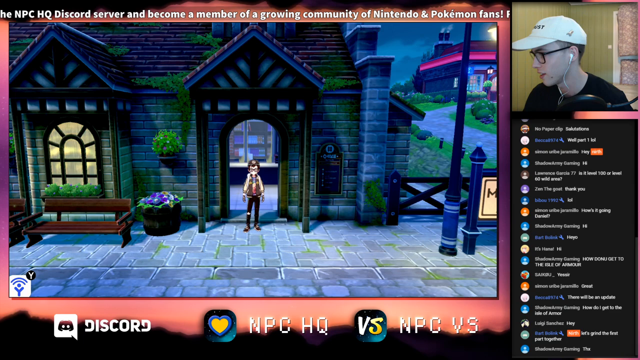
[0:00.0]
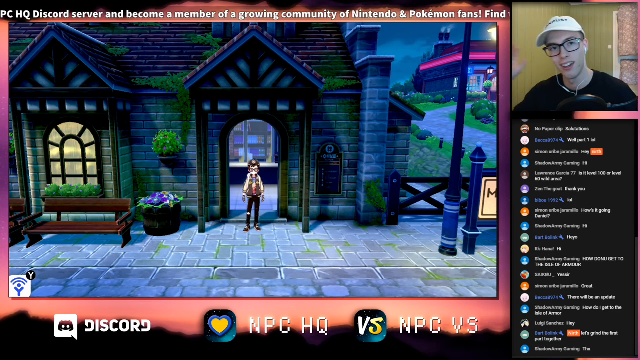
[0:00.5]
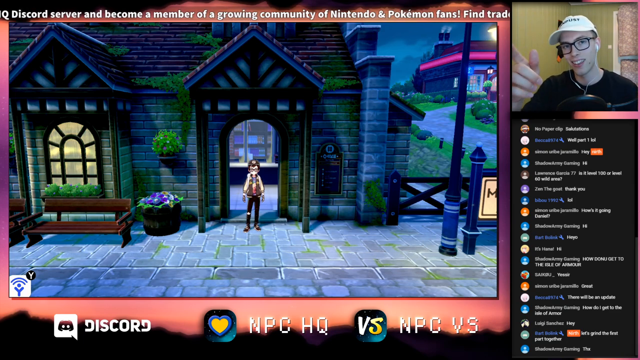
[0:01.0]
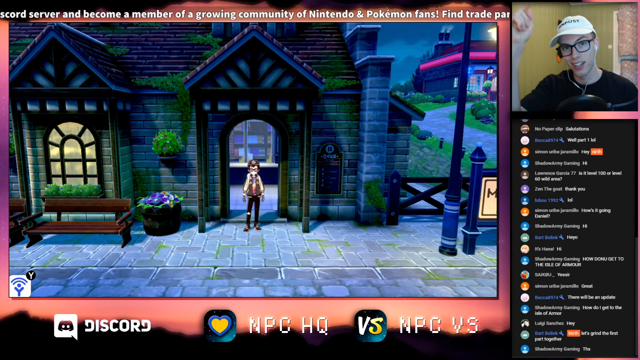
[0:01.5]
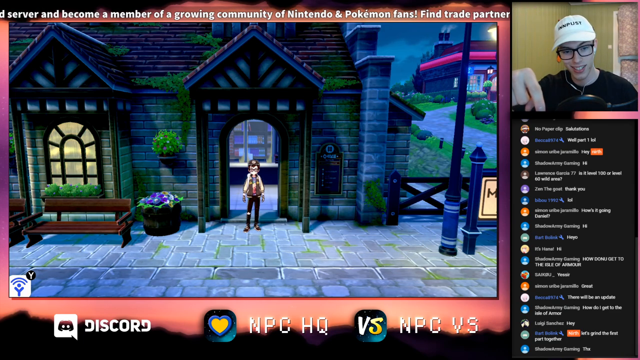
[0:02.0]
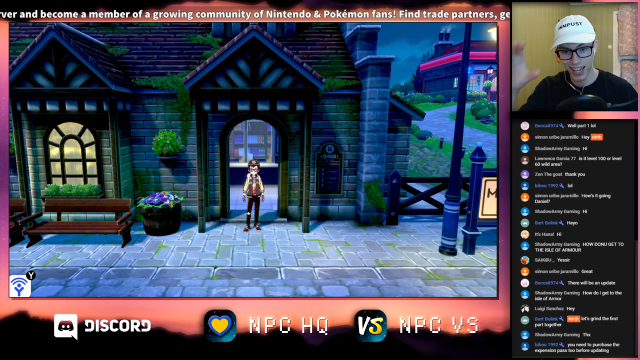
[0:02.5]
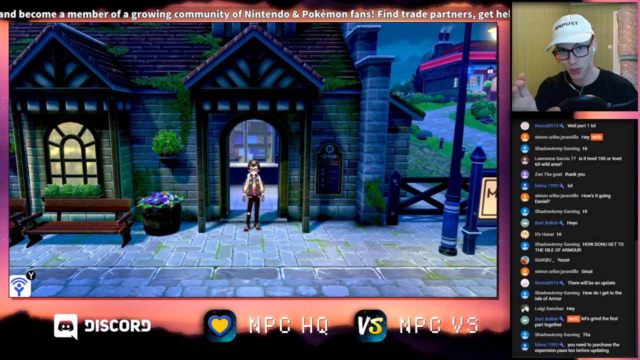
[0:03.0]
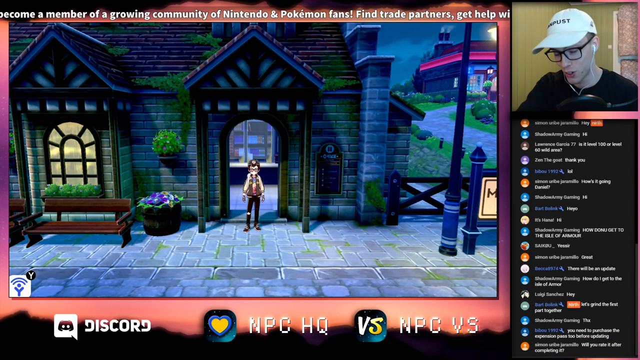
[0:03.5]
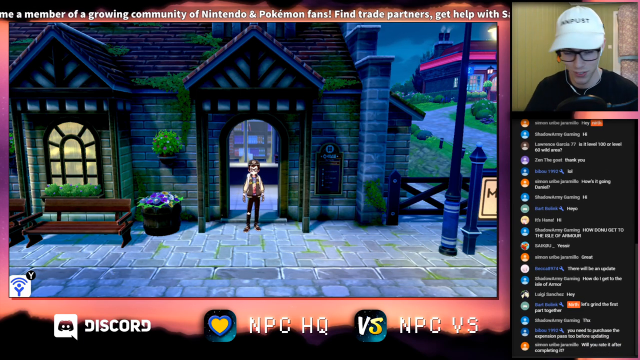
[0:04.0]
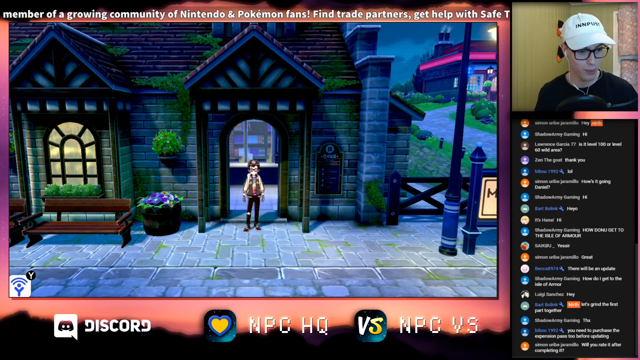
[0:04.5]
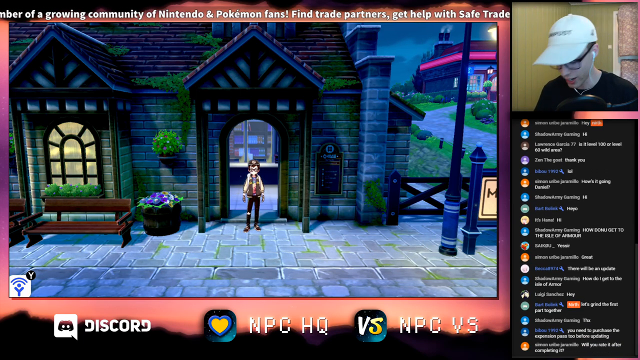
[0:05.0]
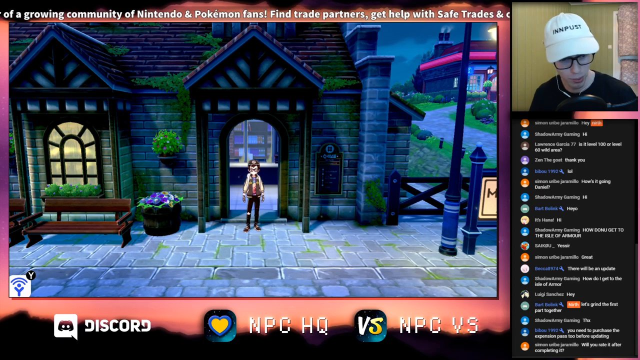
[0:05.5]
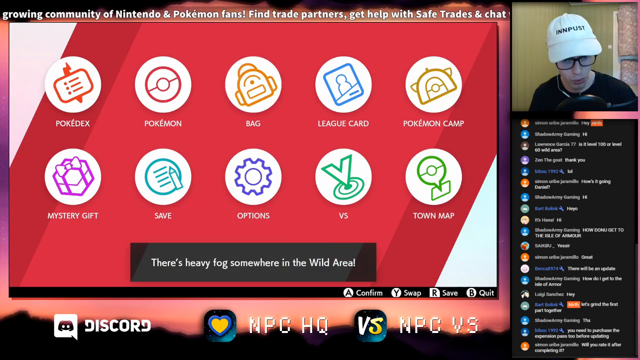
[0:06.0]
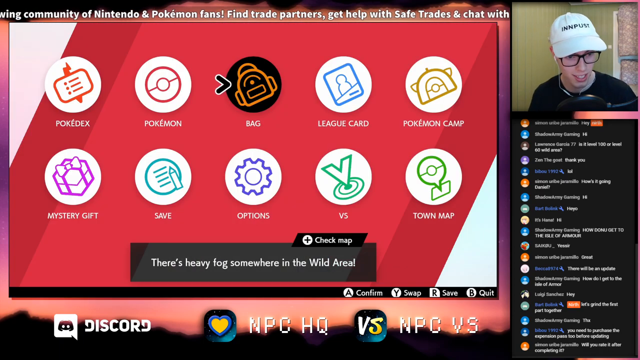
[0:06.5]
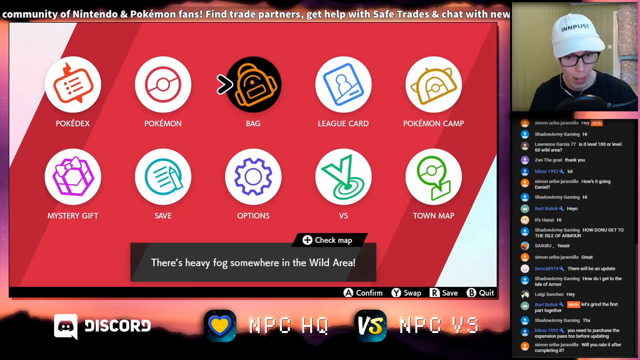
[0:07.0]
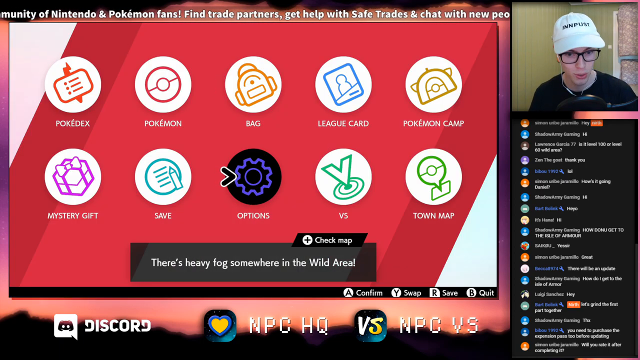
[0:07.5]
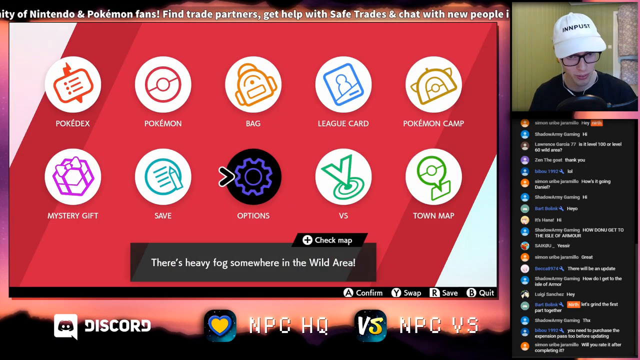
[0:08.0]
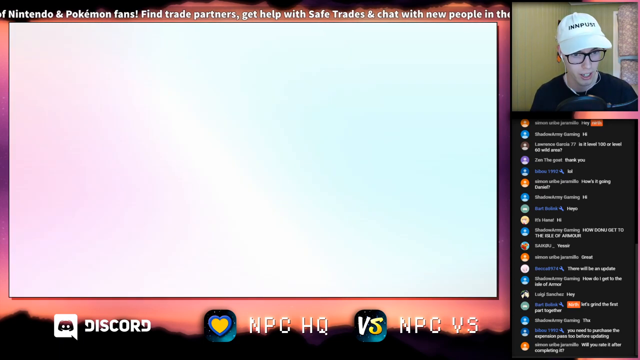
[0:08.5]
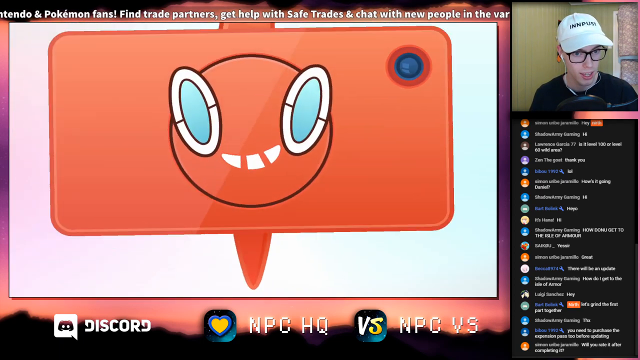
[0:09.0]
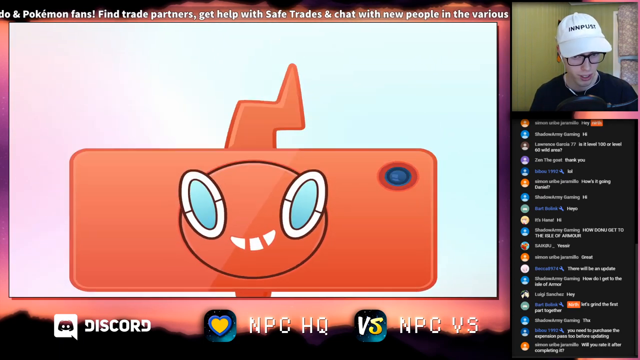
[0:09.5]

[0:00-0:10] A computer screen shows the outside of a house, with a character standing in the doorway facing the camera. It seems to be evening, since the lights are on in the house and a street lamp is visible along the way. In the top right-hand corner of the screen is an image of a young man in a white baseball cap, black-rimmed glasses and a dark top, talking directly to the camera. Beneath him there seems to be a list of what are possibly messages. Across the top of the screen text reads "Discord server and become a member of a growing community of Nintendo and Pokemon fans. Find trade partners, get help with safe trades and chat with new people in the various texts." The screen cuts to a menu that is mainly red with a little white. There are ten icons, each reading something different, including Pokédex, Pokémon, Pokémon Camp, Town Map, Options, Save, Mystery Gift, BS and League Card. Beneath this a caption reads "there's heavy fog somewhere in the wild area."